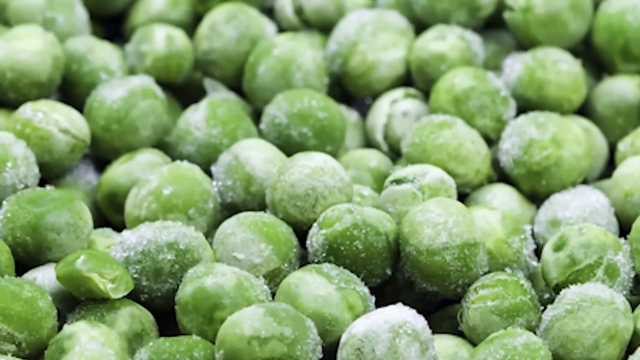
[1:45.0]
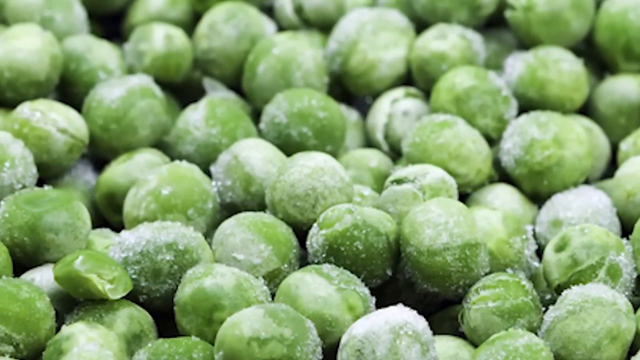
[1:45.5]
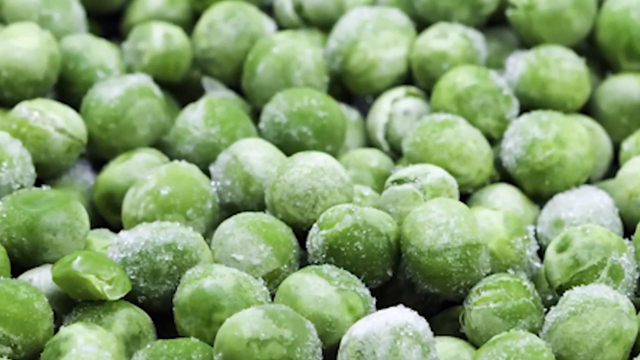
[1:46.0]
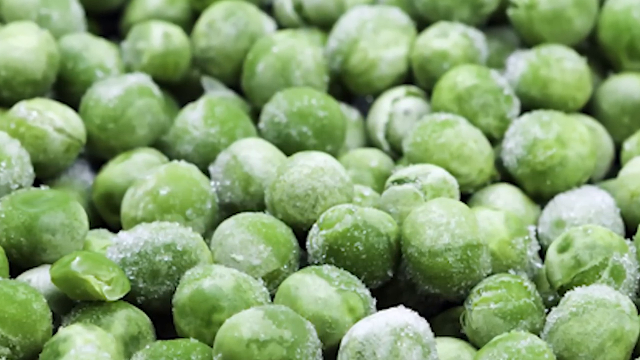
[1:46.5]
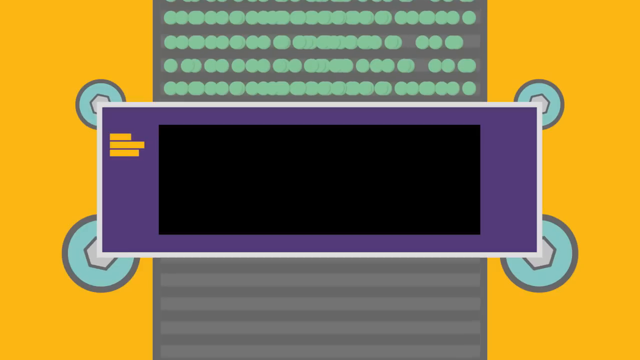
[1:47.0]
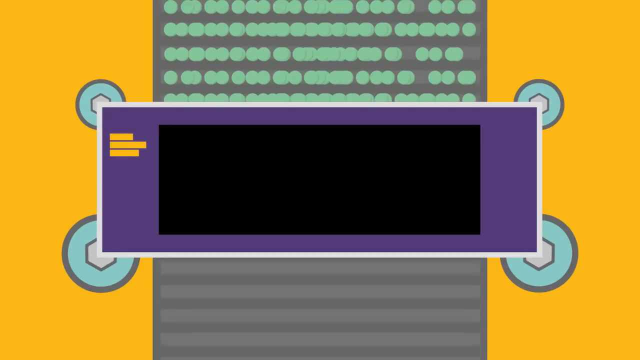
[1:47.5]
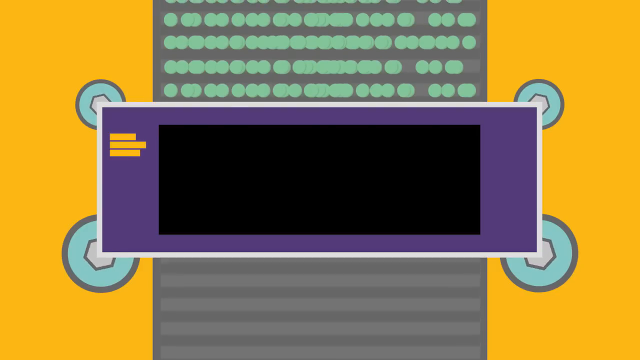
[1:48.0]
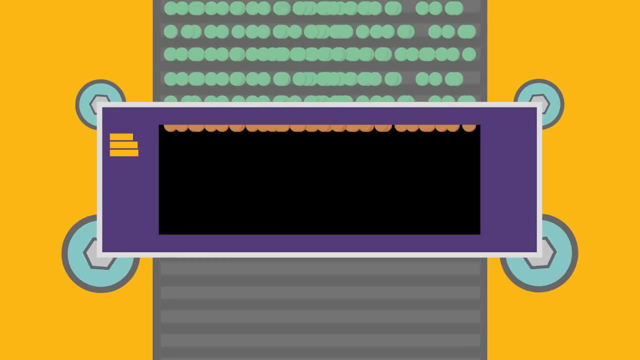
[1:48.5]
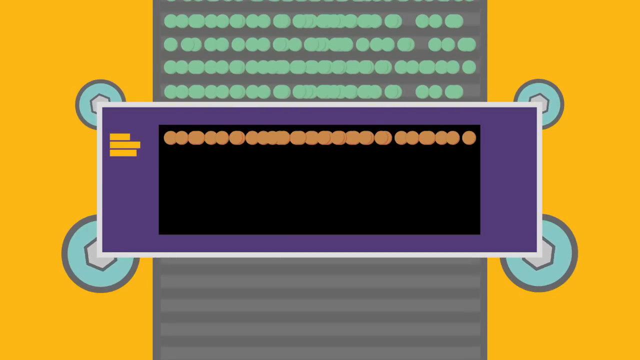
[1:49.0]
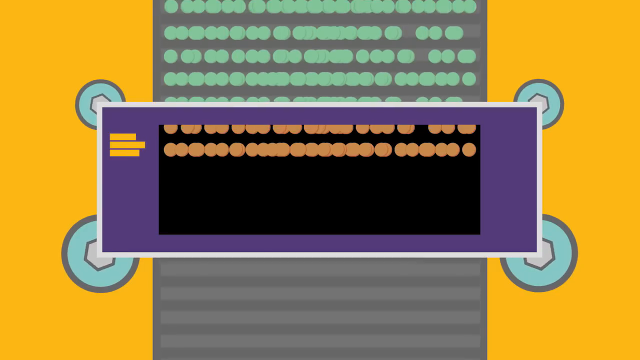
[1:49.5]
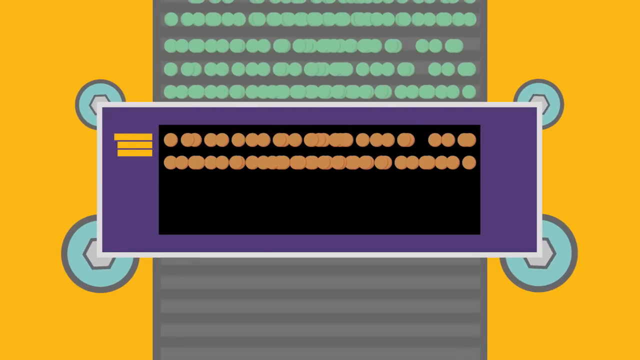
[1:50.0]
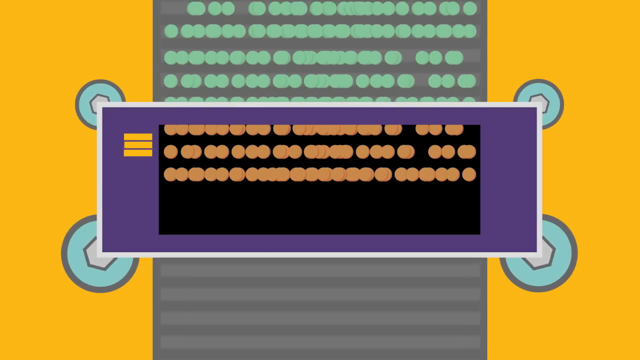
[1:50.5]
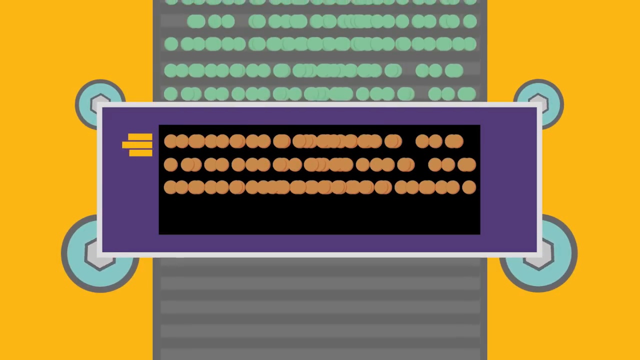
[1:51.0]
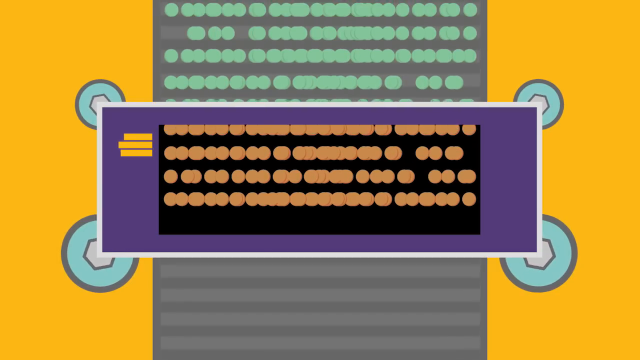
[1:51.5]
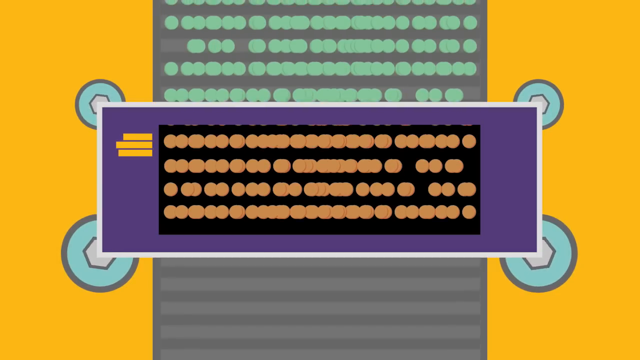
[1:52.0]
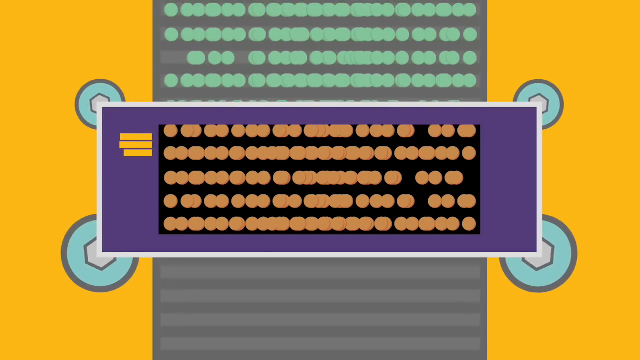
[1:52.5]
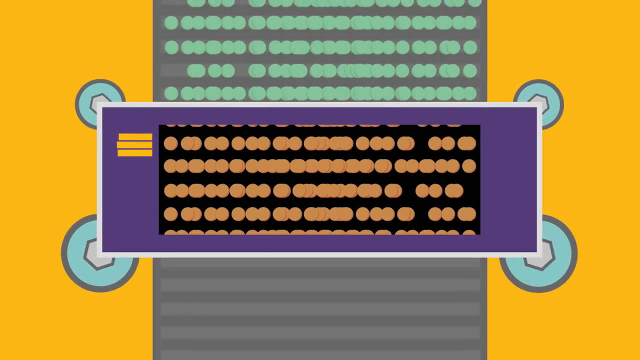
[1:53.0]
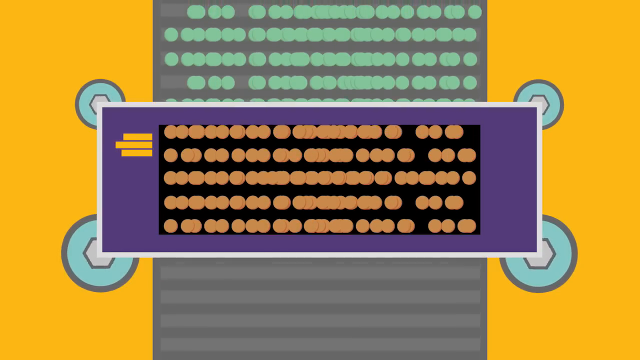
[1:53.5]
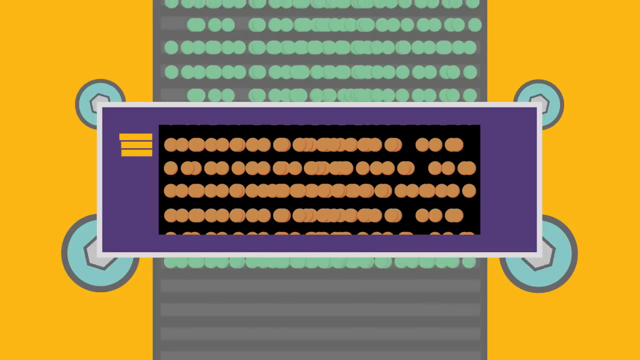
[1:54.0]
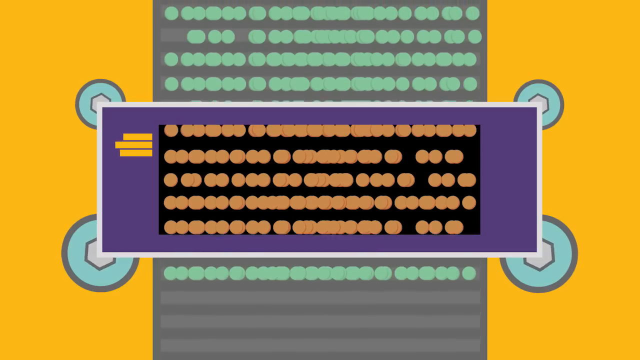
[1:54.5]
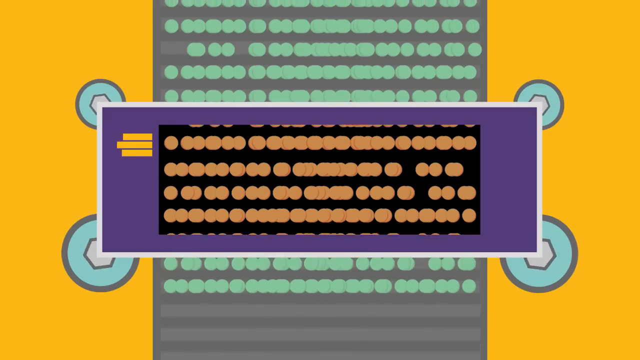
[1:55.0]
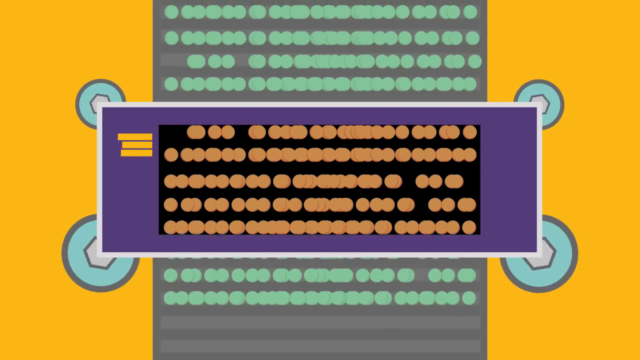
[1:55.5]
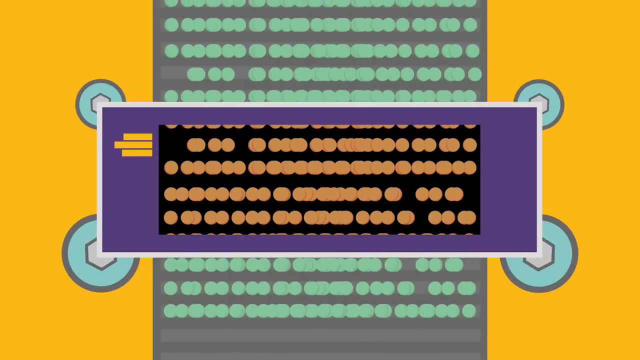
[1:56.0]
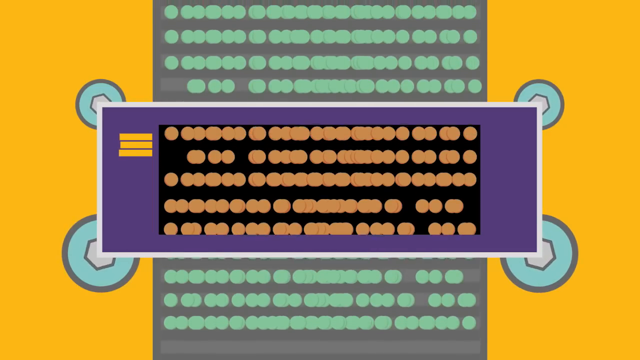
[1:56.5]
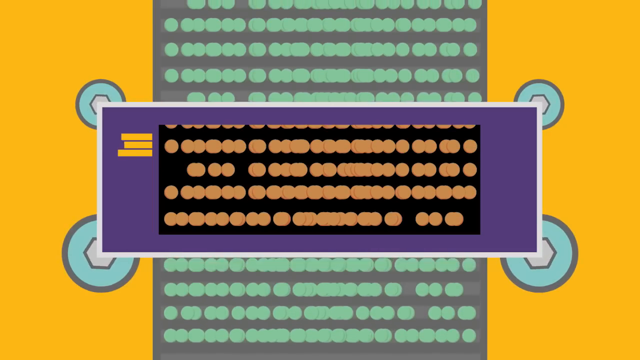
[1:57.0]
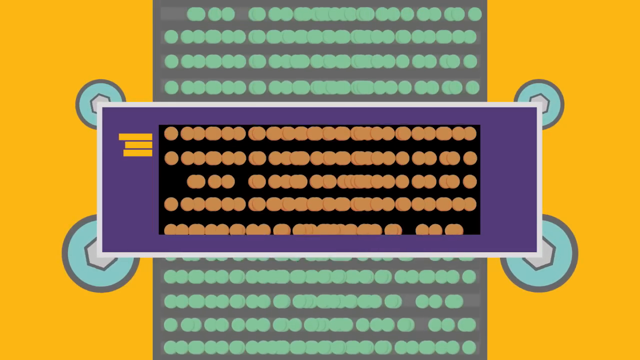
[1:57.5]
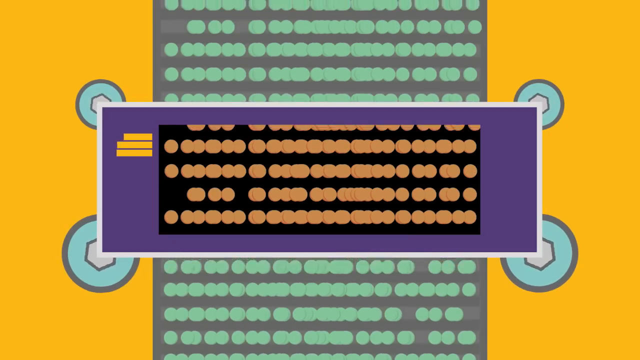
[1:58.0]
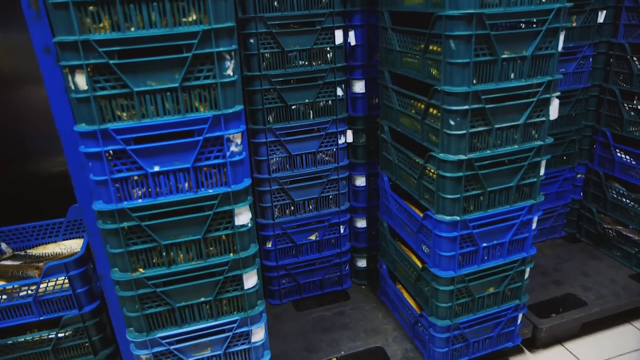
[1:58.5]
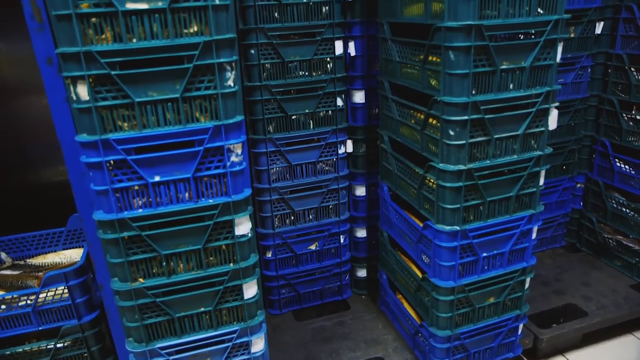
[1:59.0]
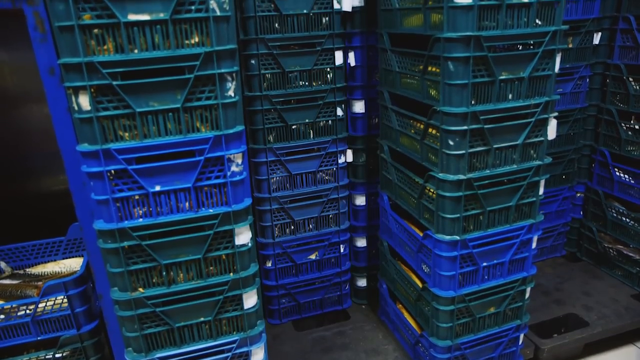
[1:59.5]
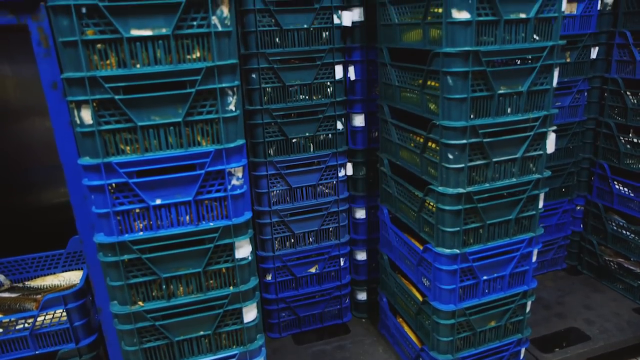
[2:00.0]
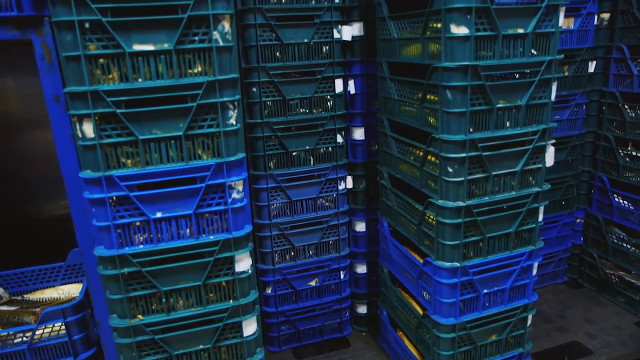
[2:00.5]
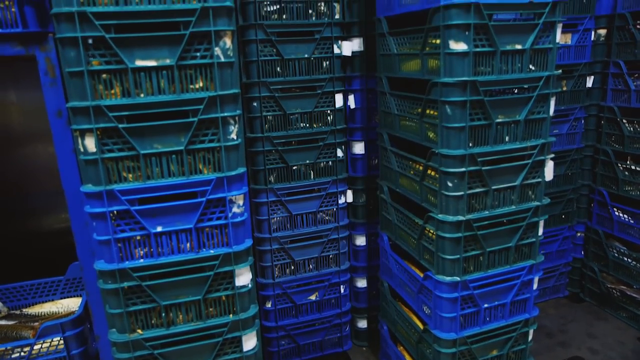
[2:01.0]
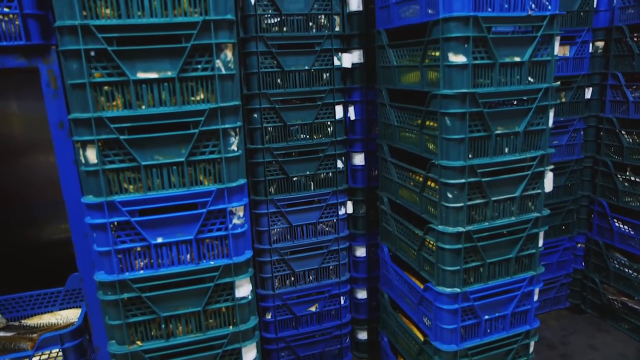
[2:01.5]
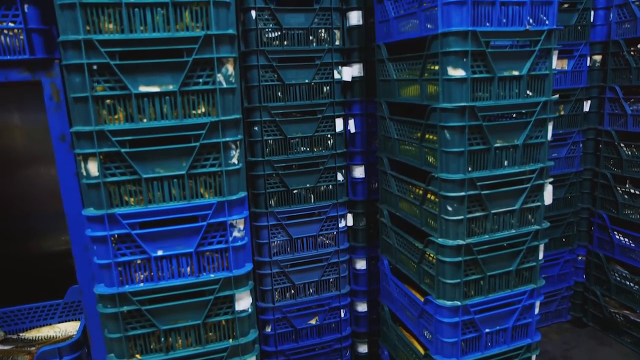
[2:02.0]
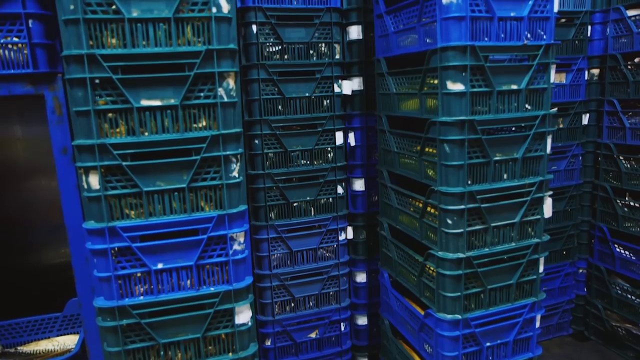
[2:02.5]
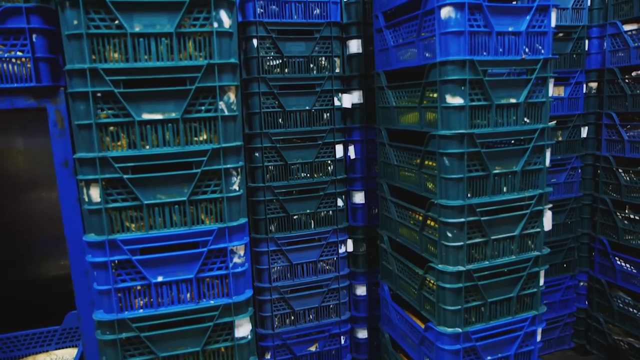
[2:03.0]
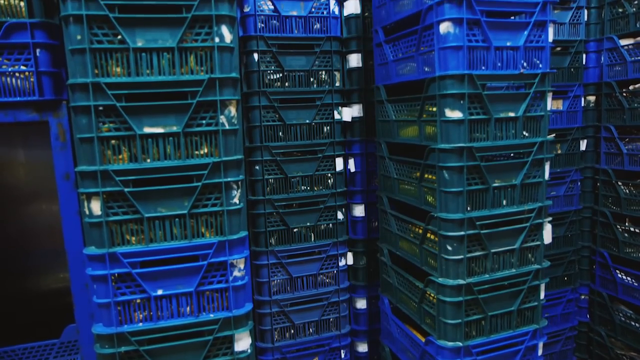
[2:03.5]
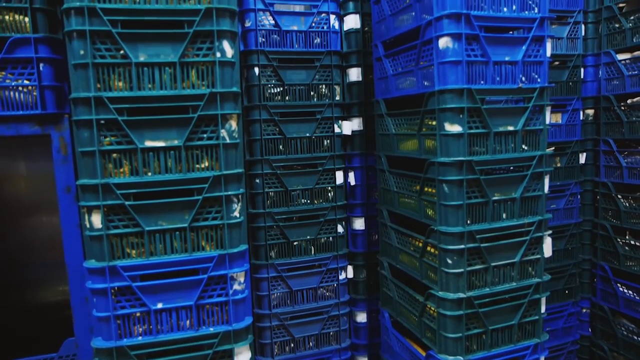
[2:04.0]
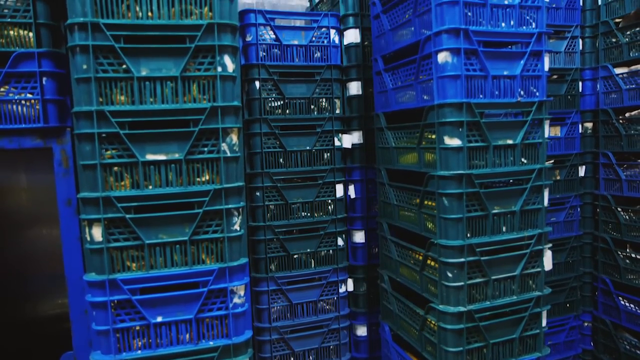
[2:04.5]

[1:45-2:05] After the close-up of frozen peas, a new illustration shows the peas going through the conveyor belt from the top down, apparently showing them being packaged. The next shot shows a large number of blue and green containers stacked high; it cannot be told whether anything is in them, though they probably hold peas. The camera pans slowly up to almost the top of the pile, then cuts to a close-up of frozen peas.